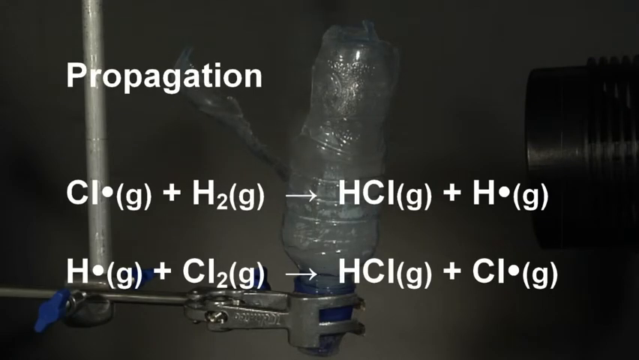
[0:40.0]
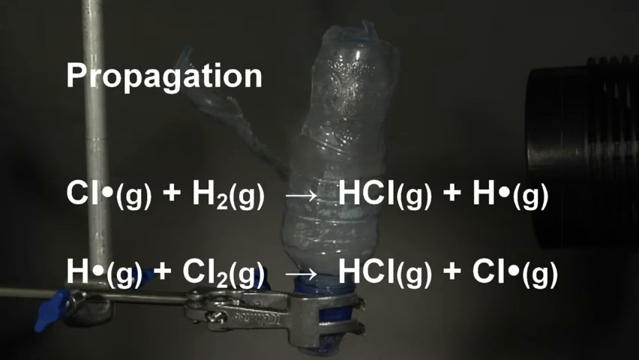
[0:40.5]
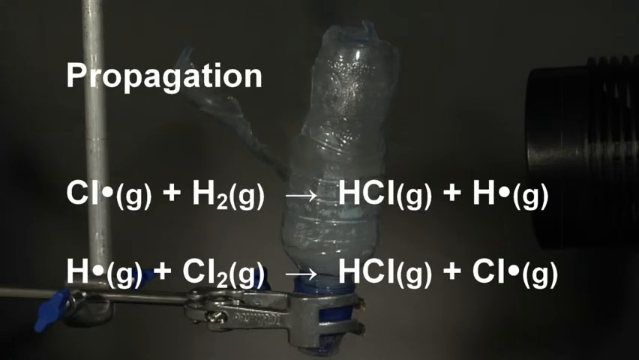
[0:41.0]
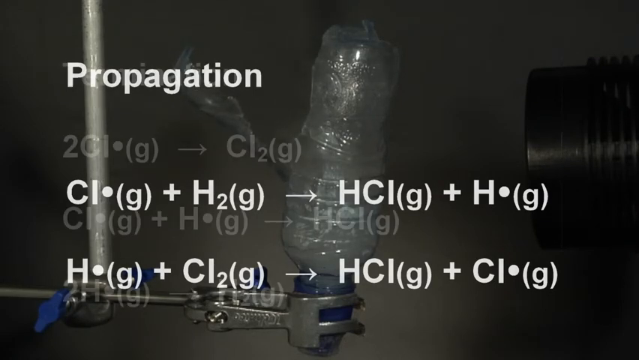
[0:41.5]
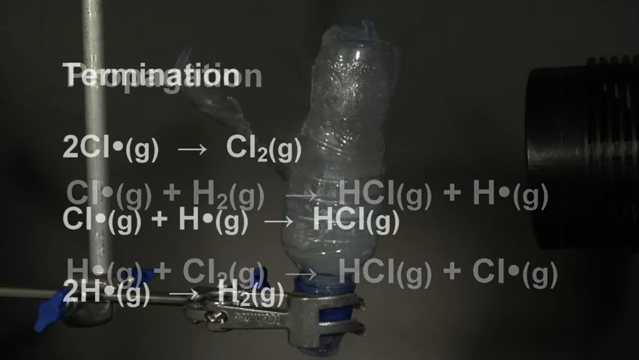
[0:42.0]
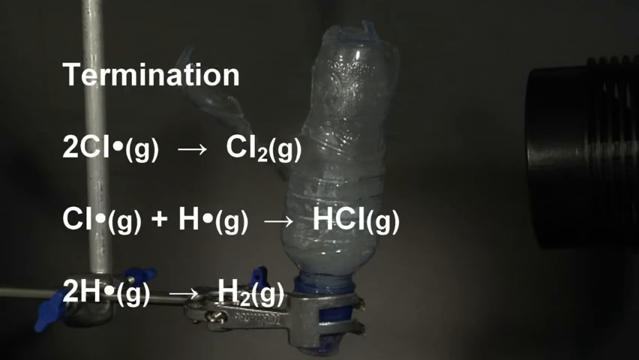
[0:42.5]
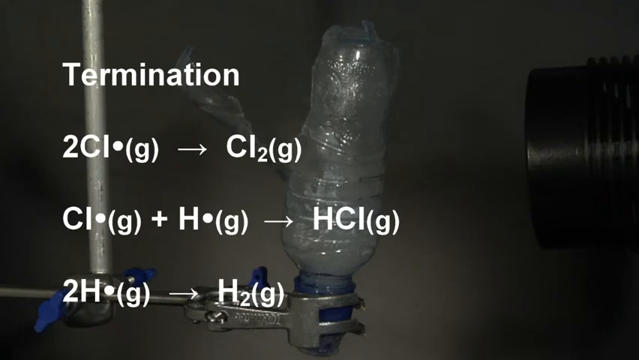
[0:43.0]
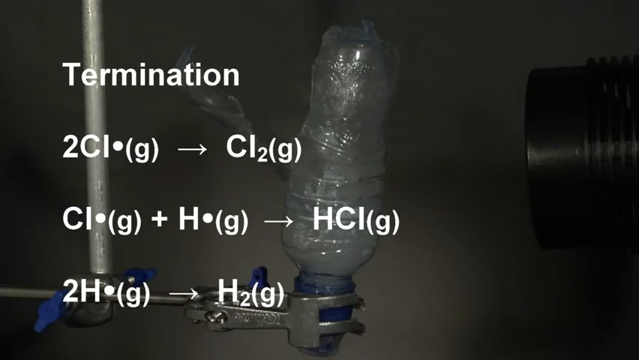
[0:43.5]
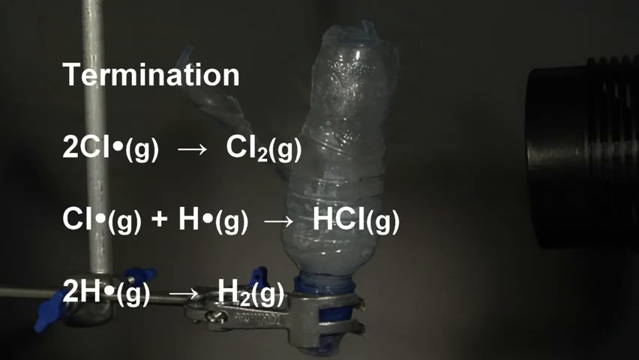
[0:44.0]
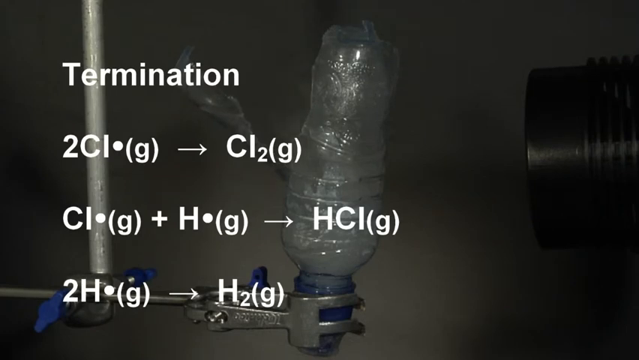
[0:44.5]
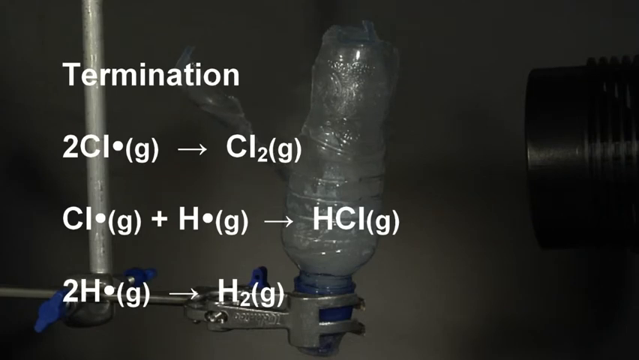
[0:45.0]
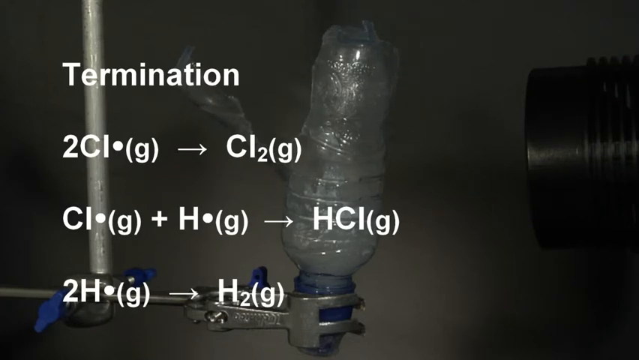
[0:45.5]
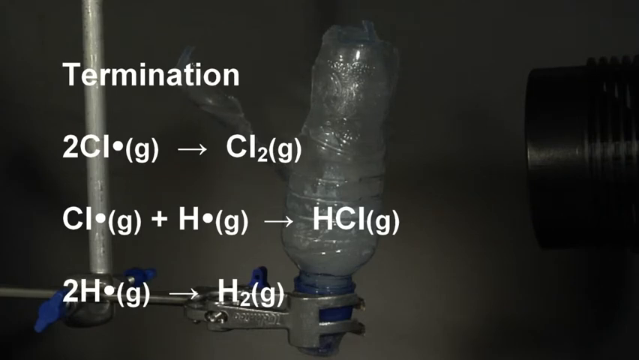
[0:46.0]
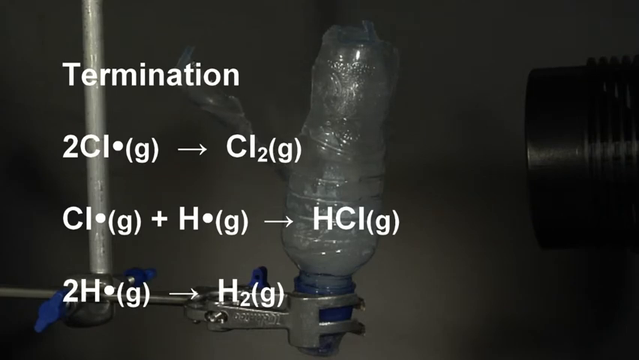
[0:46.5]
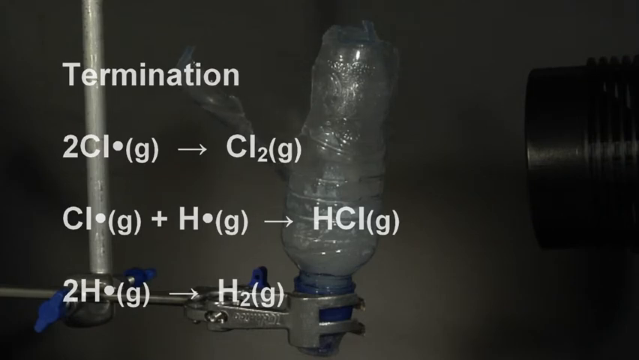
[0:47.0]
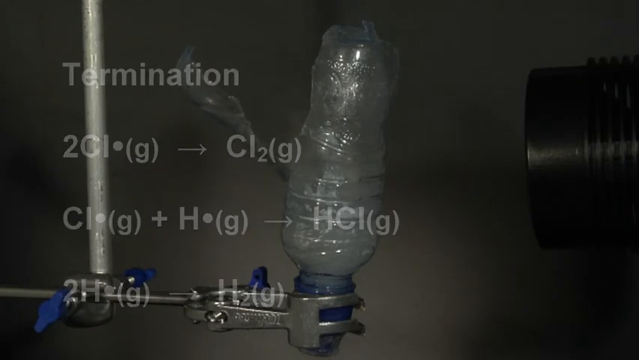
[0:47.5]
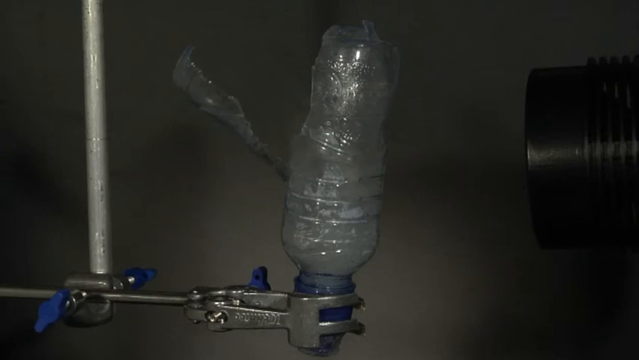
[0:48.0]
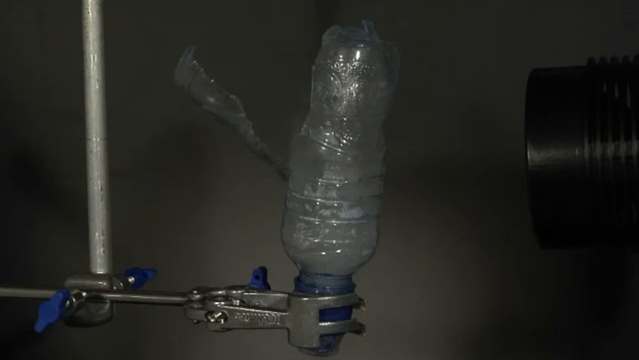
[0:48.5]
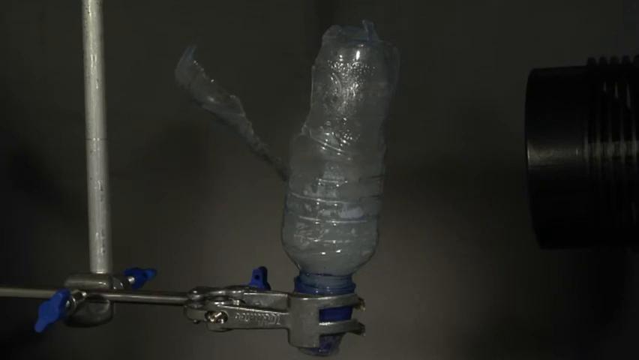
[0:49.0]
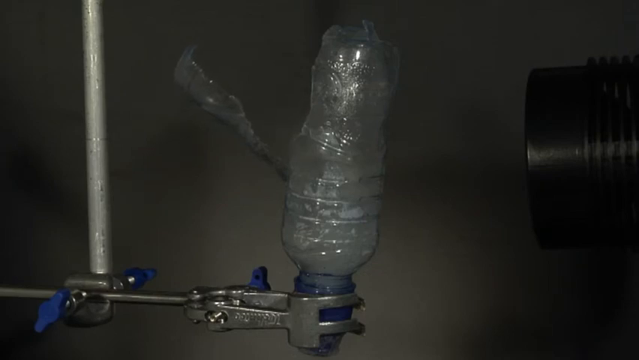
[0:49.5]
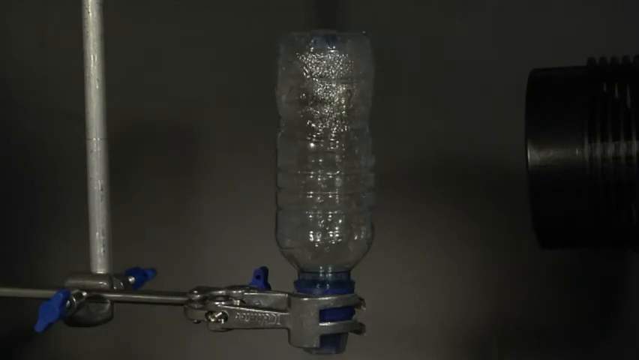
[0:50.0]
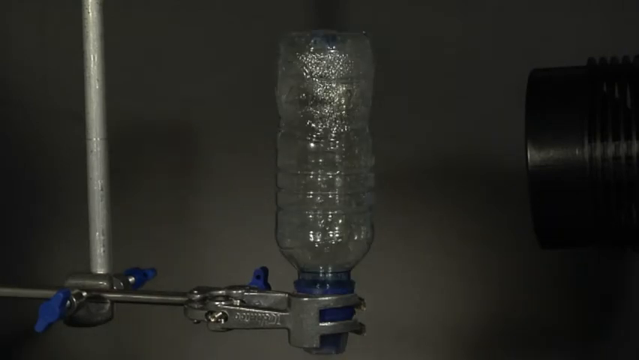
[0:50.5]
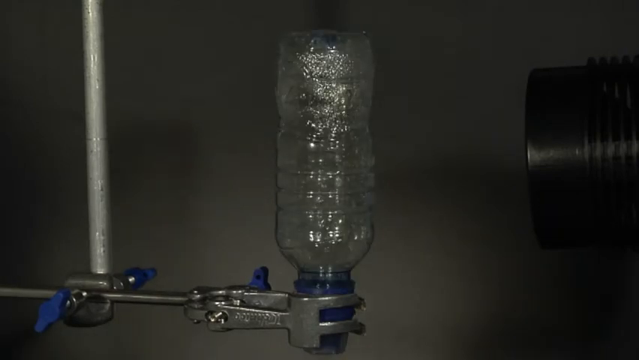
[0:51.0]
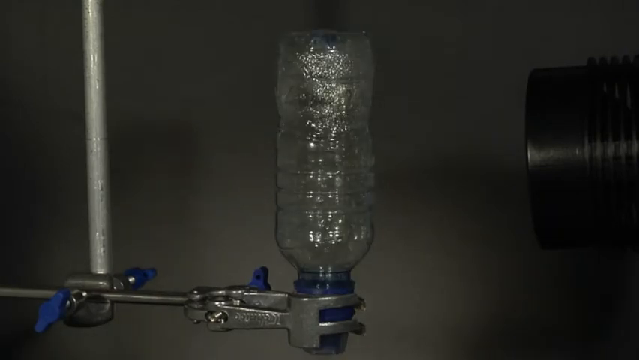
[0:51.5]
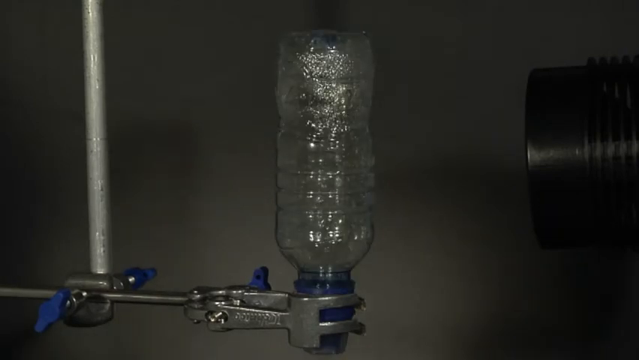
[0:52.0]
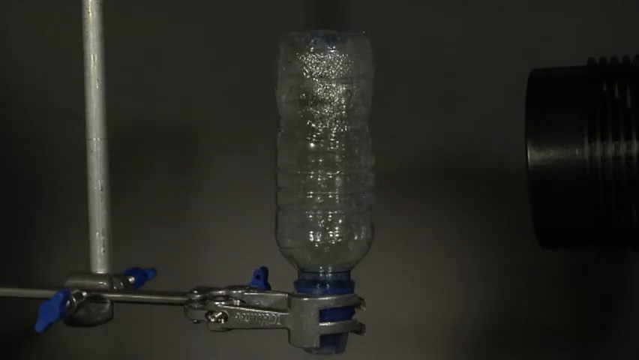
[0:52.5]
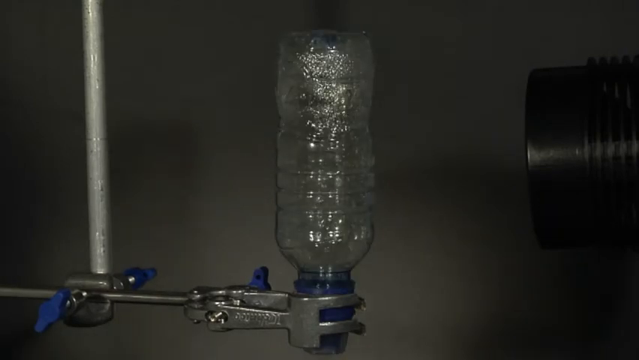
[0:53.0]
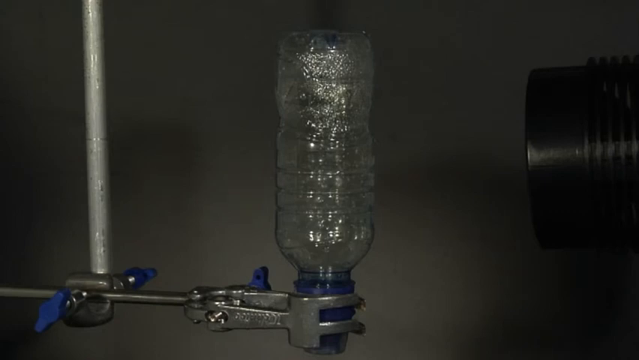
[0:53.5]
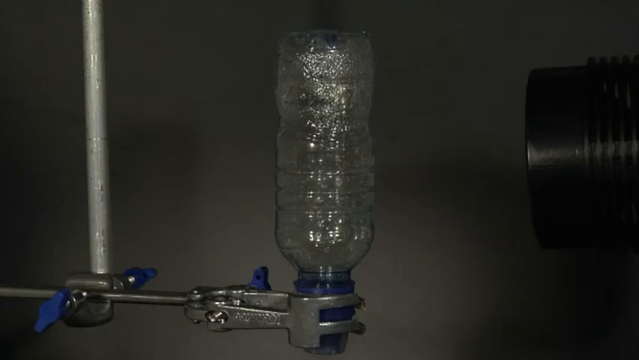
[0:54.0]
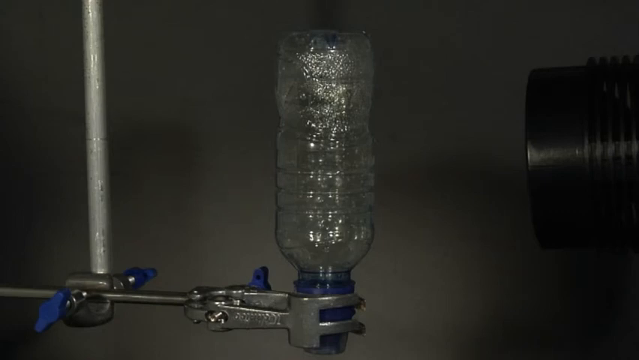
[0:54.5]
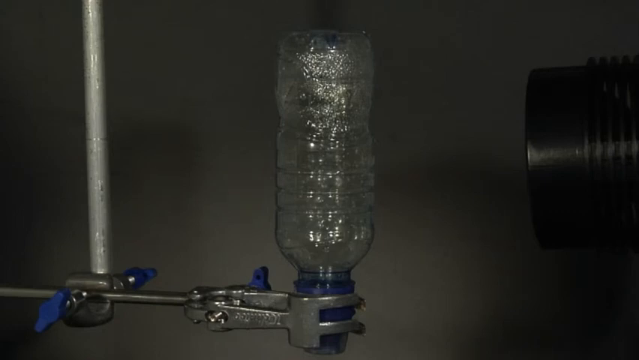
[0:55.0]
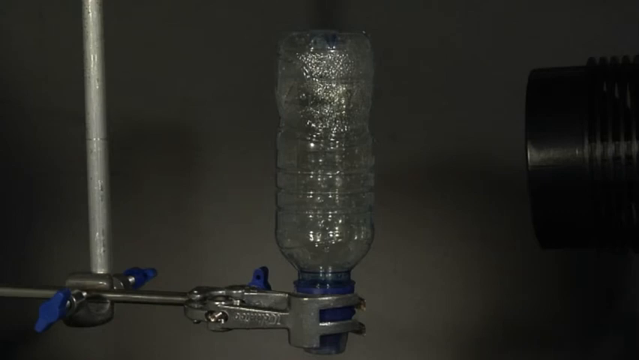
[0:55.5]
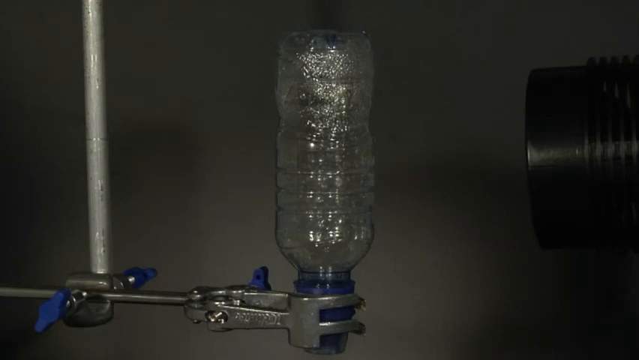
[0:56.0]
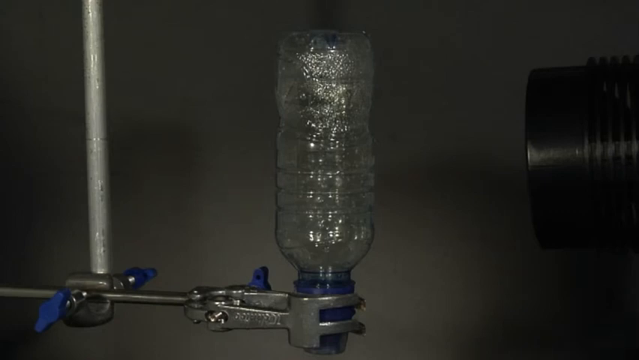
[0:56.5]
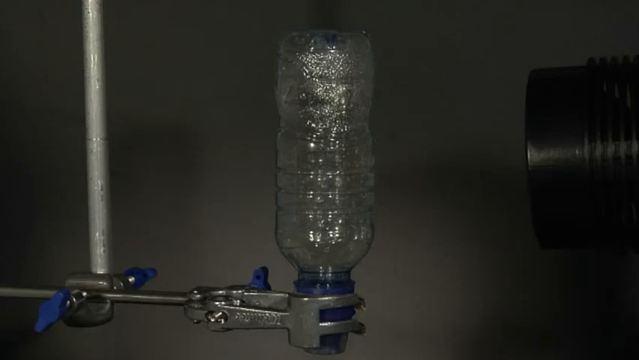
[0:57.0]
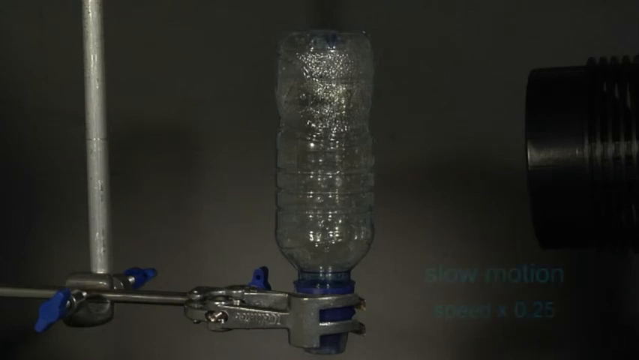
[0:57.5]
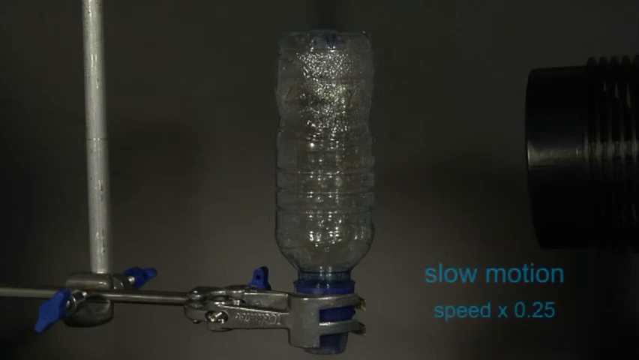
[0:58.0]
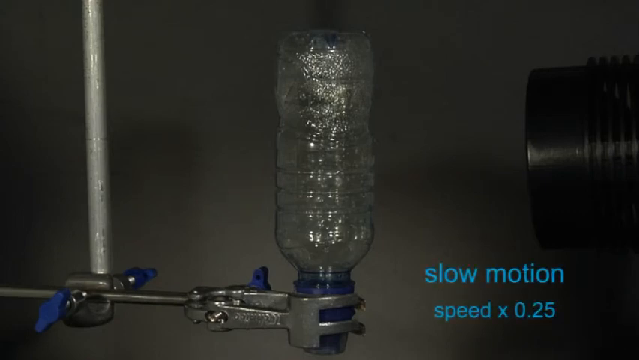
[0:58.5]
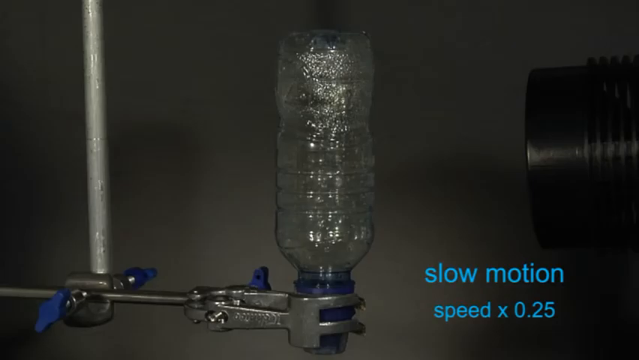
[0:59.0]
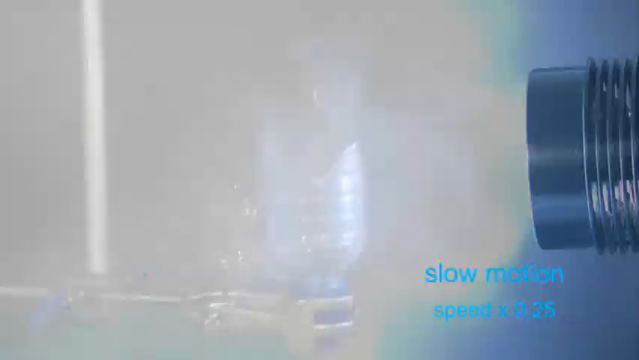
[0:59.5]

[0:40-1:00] Text about "propagation" appears with two formulas. The upside-down water bottle has a little black object, possibly a gun, next to it. Part of the bottle is falling apart after some type of explosion, and smoke comes from it. Then "termination" appears with three formulas under it. The video then returns to a regular, unaffected water bottle hanging upside down. Text reads "slow motion," and after a while there is a big flash and the water bottle kind of explodes a little.